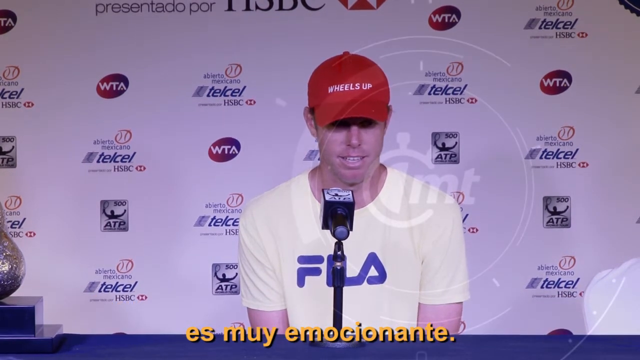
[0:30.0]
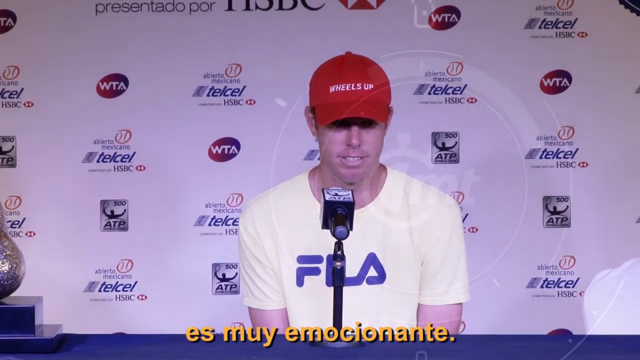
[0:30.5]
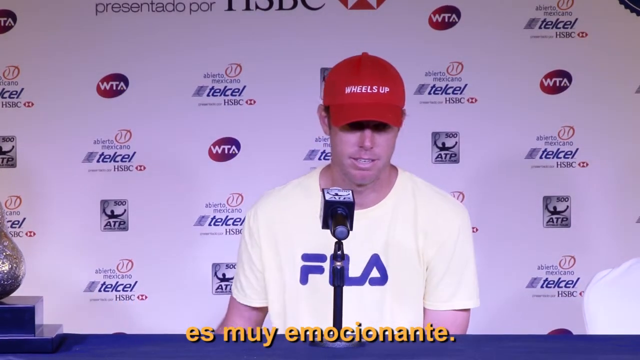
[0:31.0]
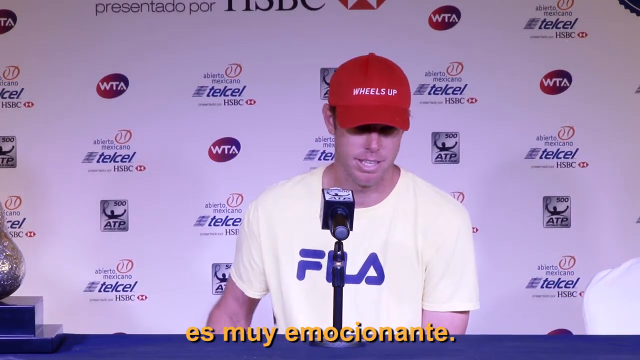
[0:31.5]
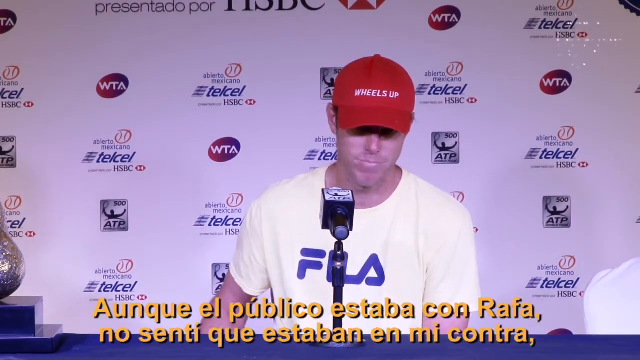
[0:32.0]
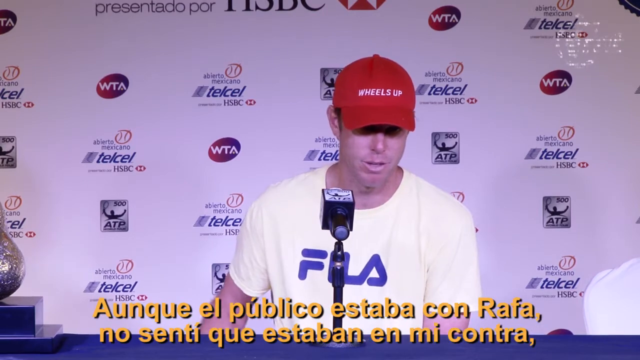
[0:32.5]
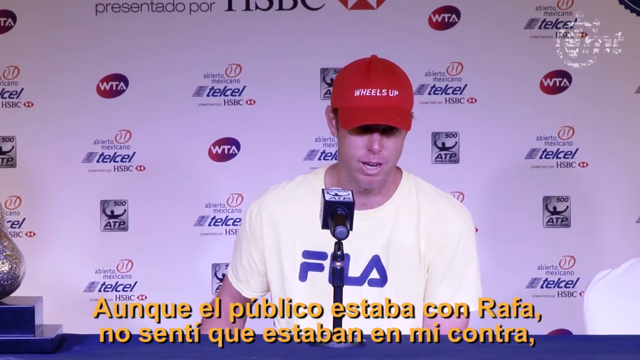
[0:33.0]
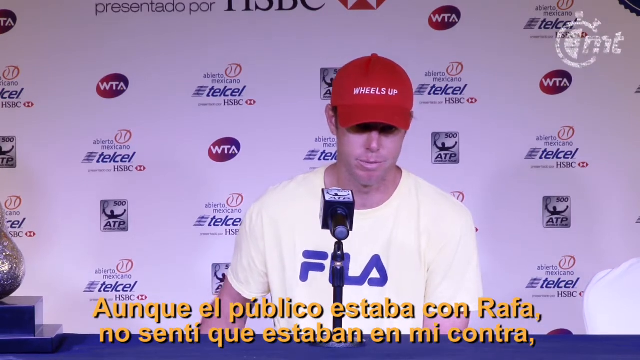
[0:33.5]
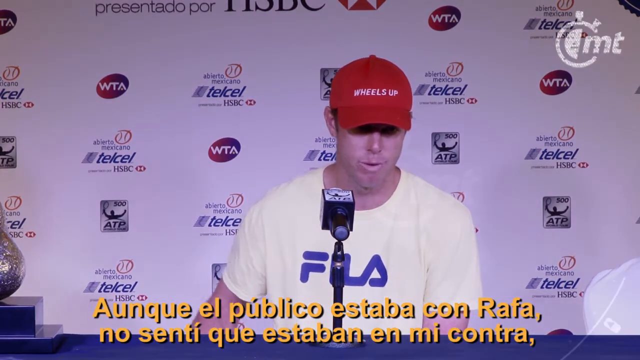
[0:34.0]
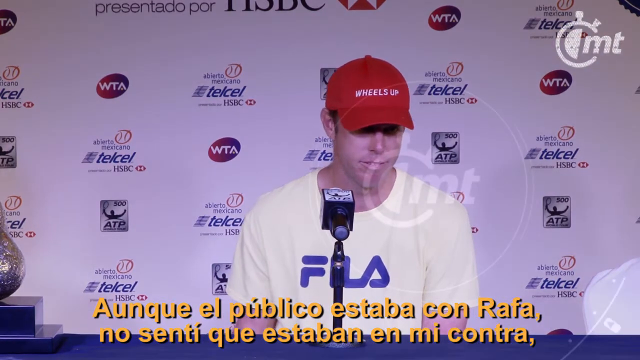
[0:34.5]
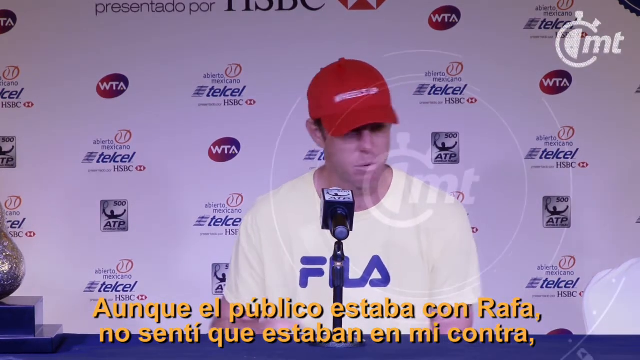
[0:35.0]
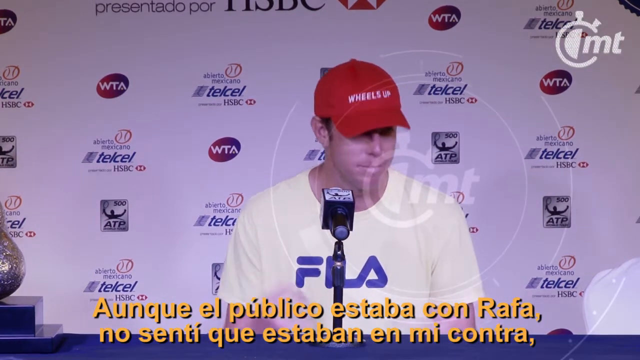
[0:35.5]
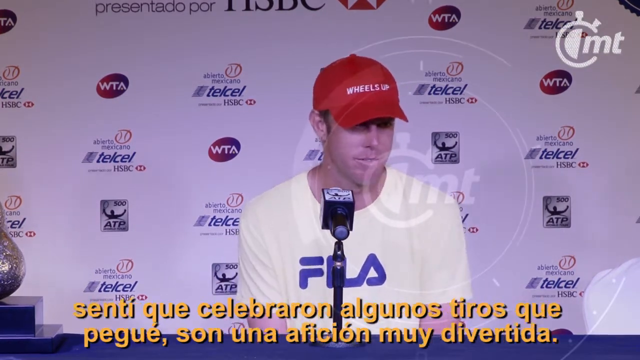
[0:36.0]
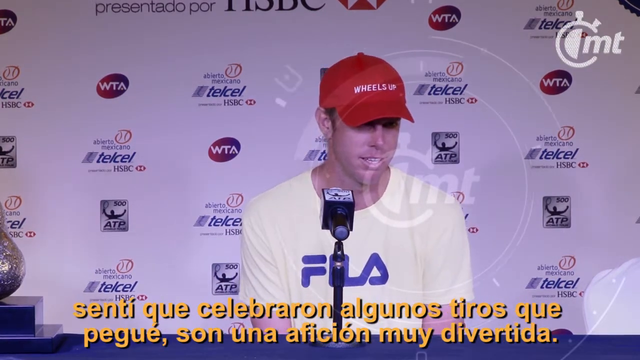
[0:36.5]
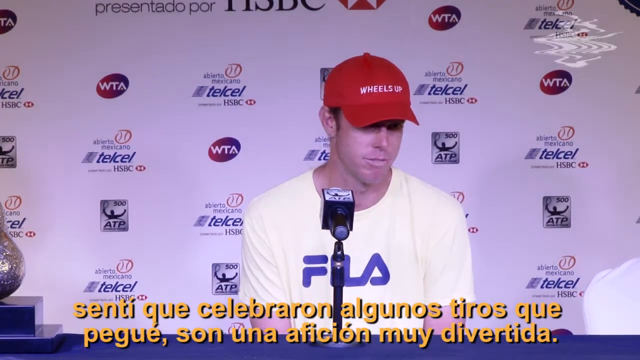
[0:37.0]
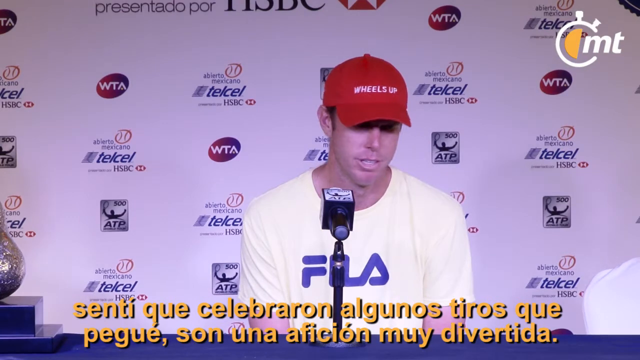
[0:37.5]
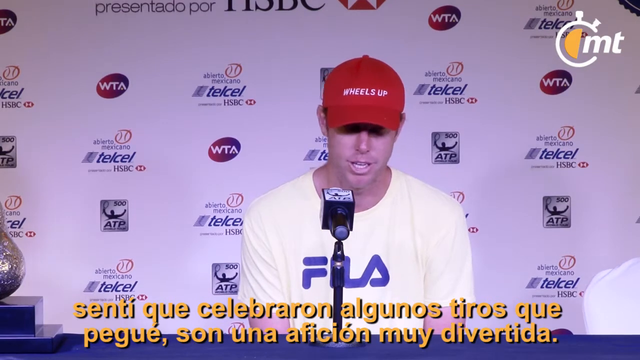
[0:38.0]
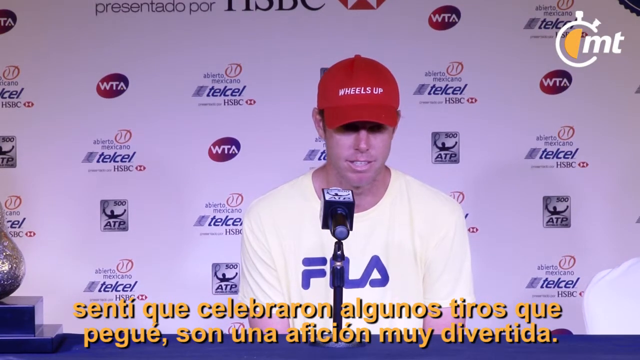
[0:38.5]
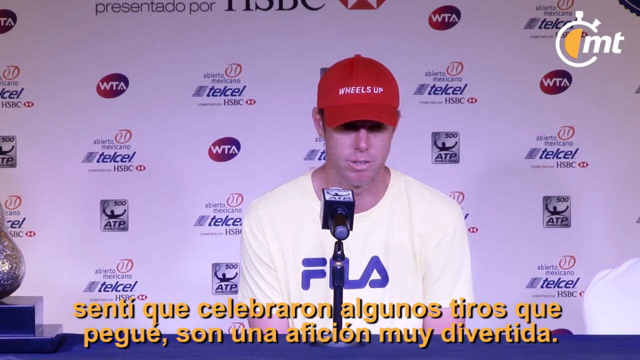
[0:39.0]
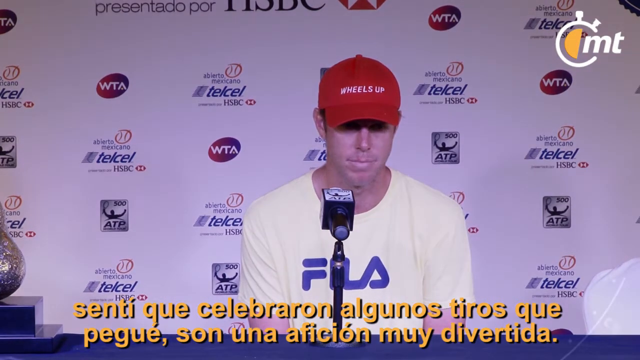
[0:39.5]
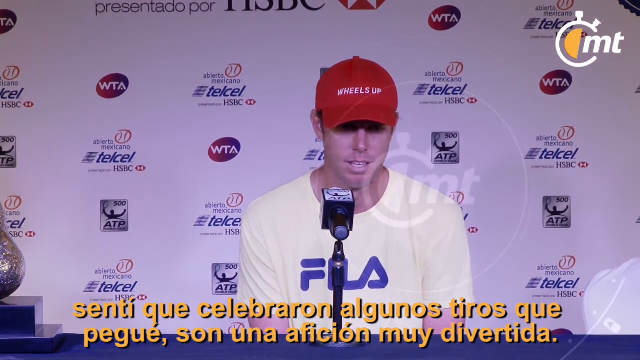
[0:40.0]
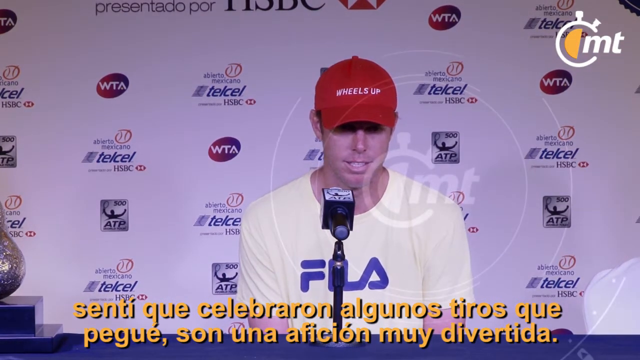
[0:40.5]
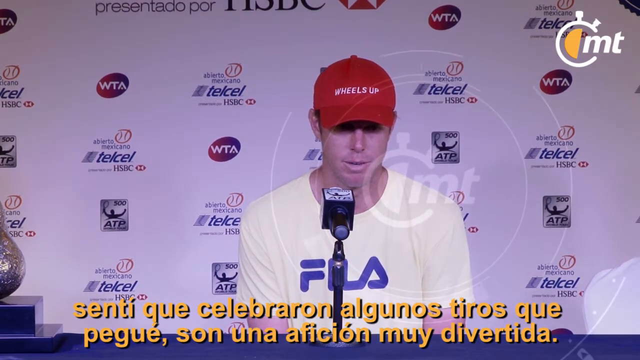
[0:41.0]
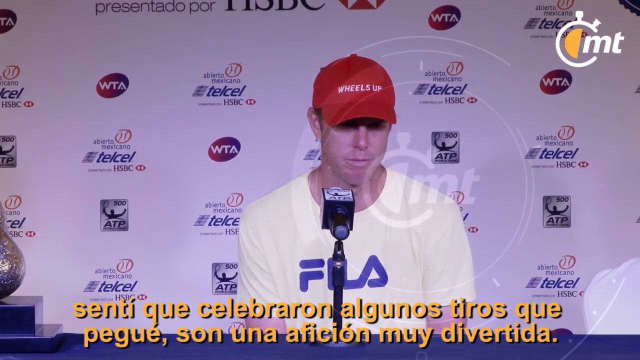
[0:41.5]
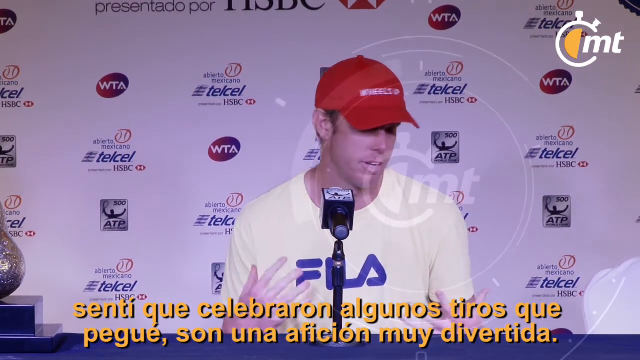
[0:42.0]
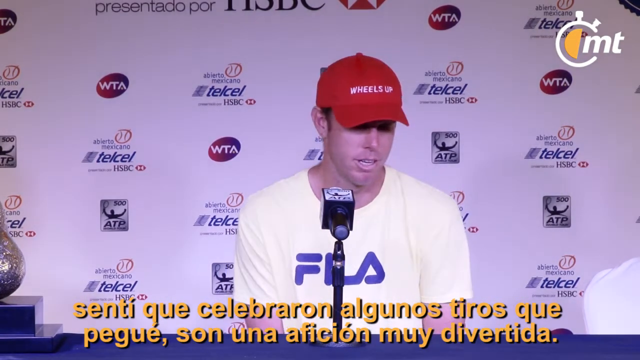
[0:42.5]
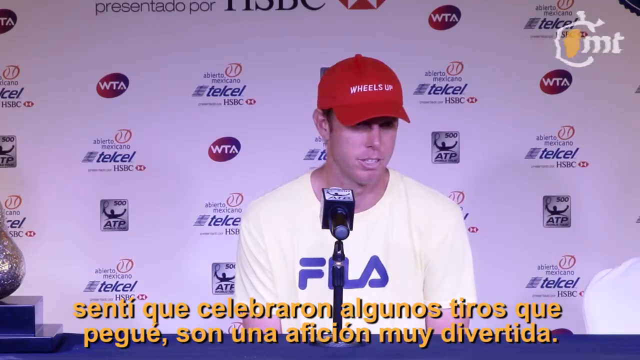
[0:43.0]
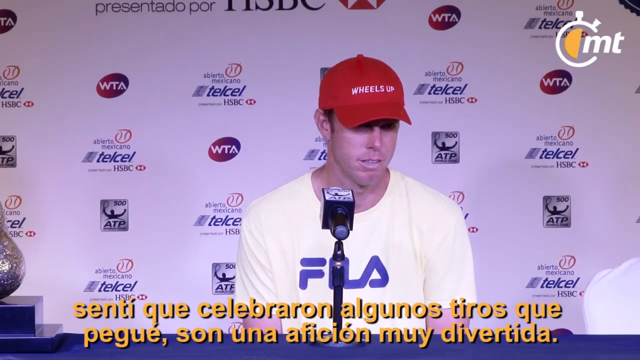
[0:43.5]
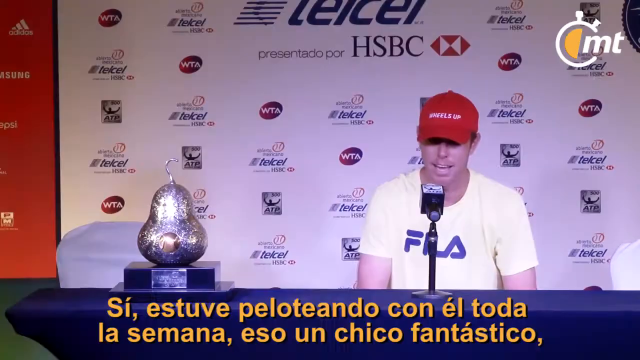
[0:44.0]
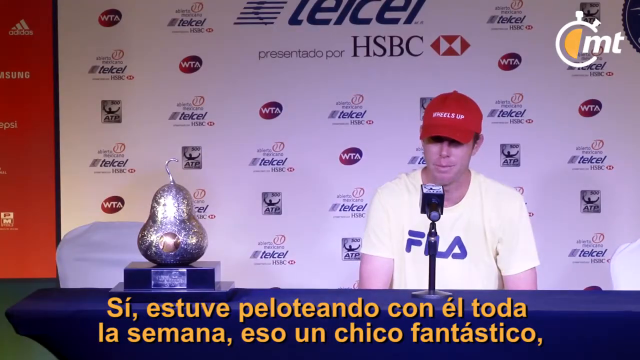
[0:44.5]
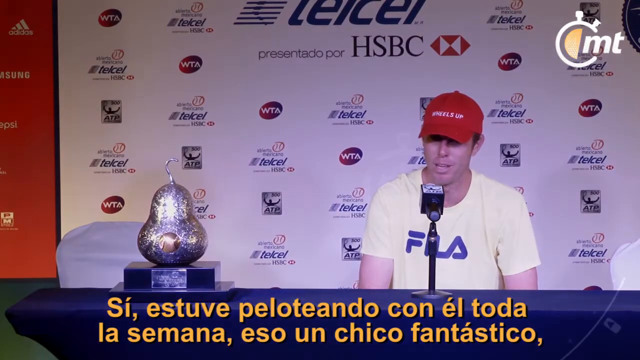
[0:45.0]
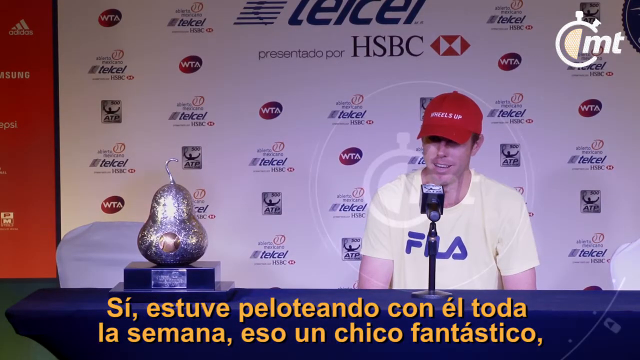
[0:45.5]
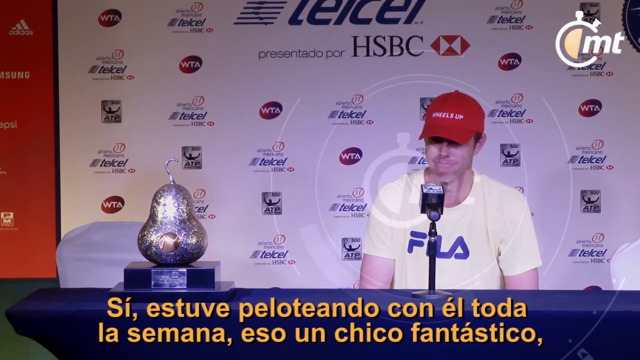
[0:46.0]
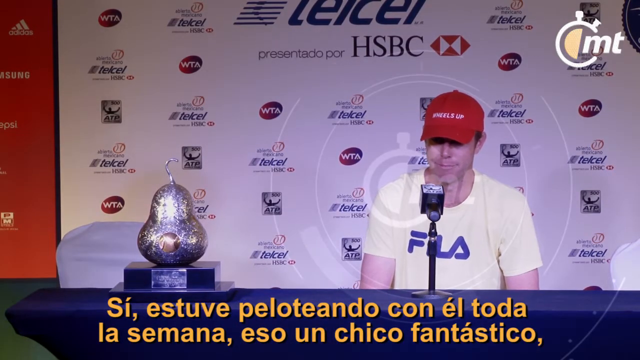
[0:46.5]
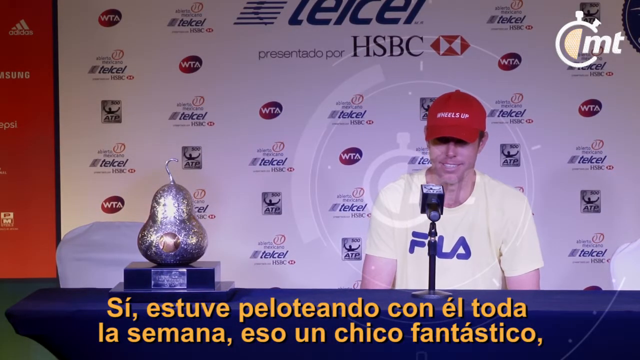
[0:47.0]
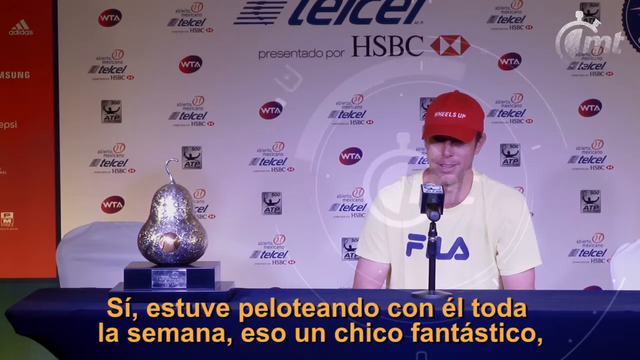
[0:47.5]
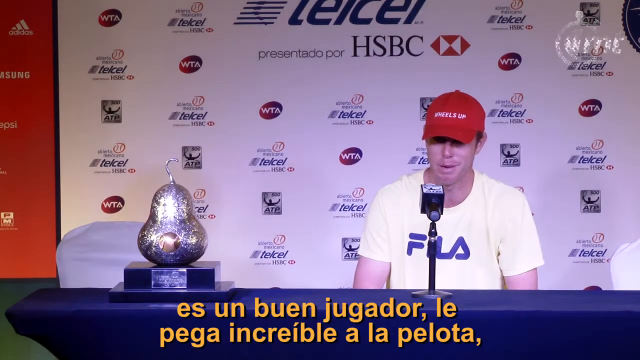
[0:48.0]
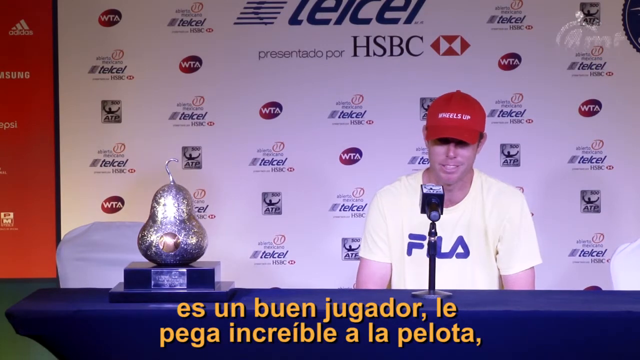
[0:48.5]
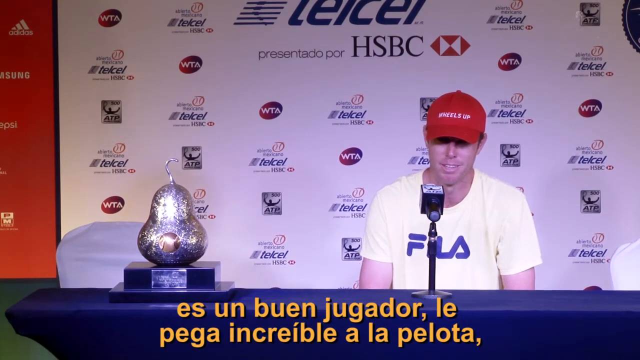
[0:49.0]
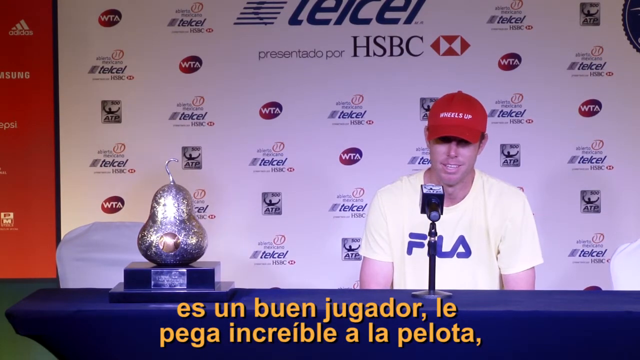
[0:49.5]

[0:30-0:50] The interview with Sam Querrey continues, with the "CMT" watermark in the upper right corner, its C looking like a stopwatch. The young man looks to be in his early 20s and wears a red hat with "Wheels Up" on the front and a white t-shirt with a blue "Fila". To the viewer's left is what looks like some kind of silver peach or pear on a hook. Behind him are the letters "ATP" and "WTA". Yellow closed-caption text in French runs along the bottom. He appears to be at a press conference, either following or before a tennis match.